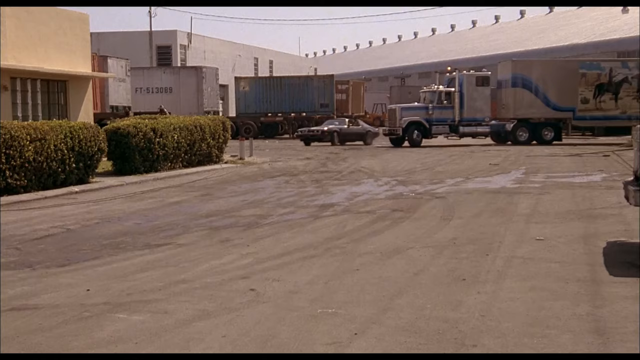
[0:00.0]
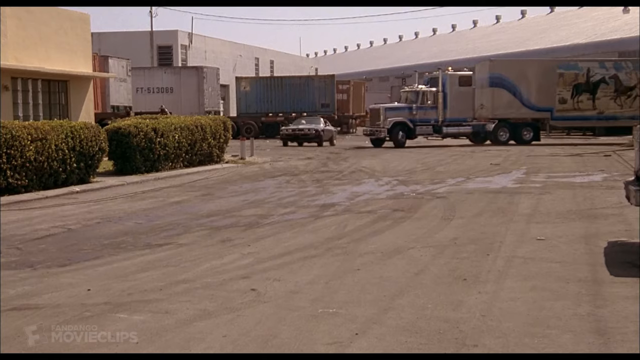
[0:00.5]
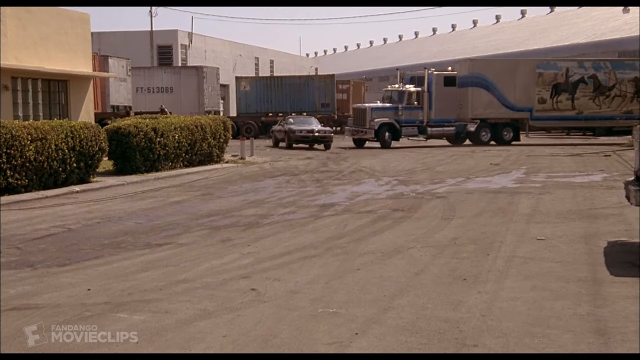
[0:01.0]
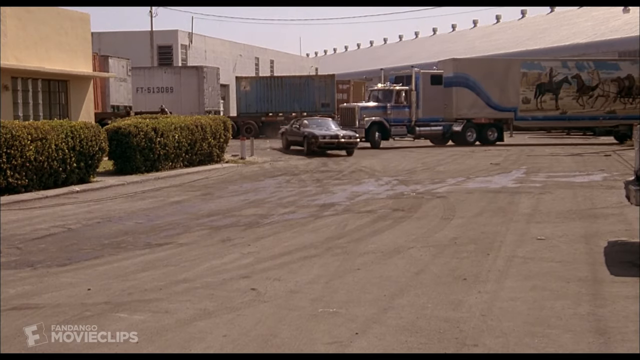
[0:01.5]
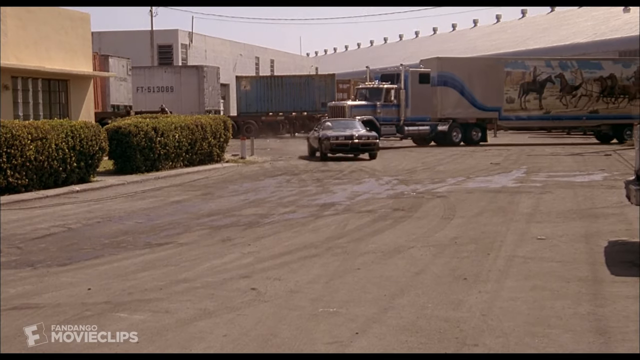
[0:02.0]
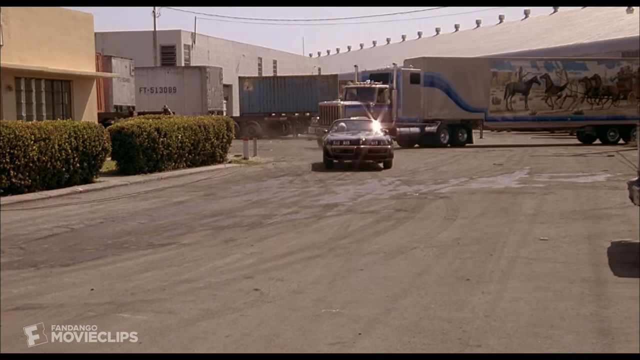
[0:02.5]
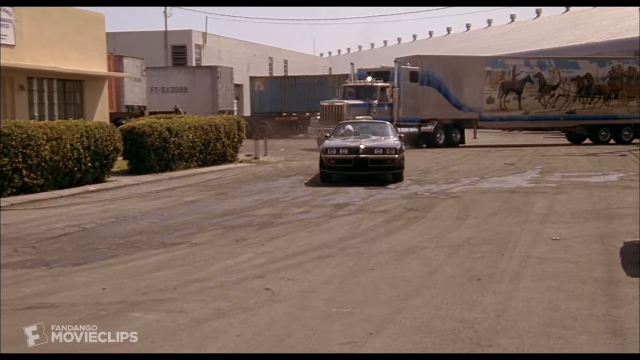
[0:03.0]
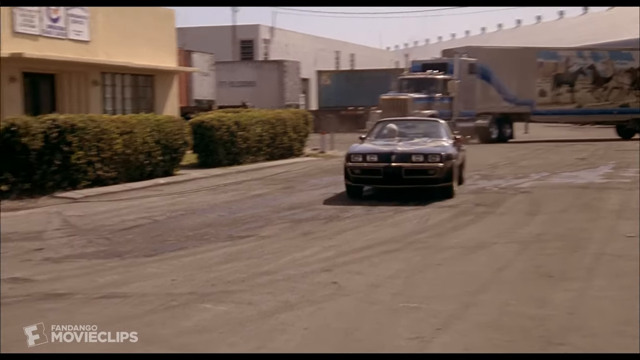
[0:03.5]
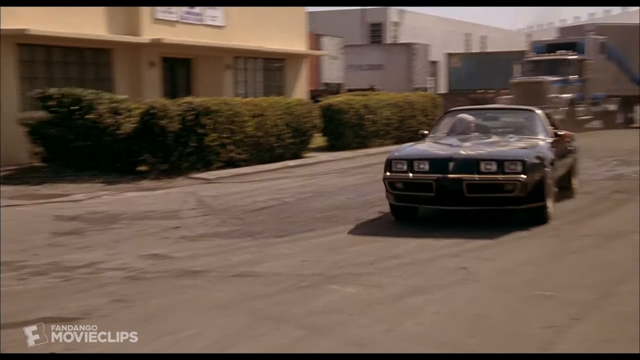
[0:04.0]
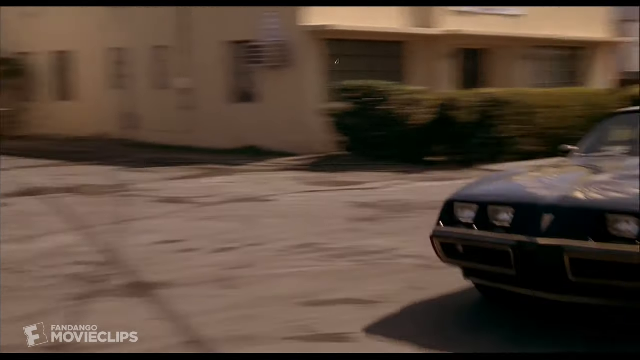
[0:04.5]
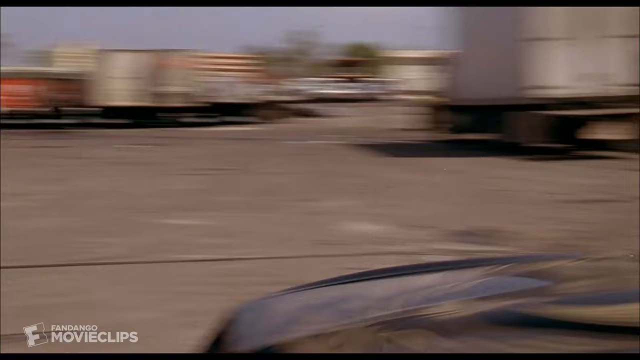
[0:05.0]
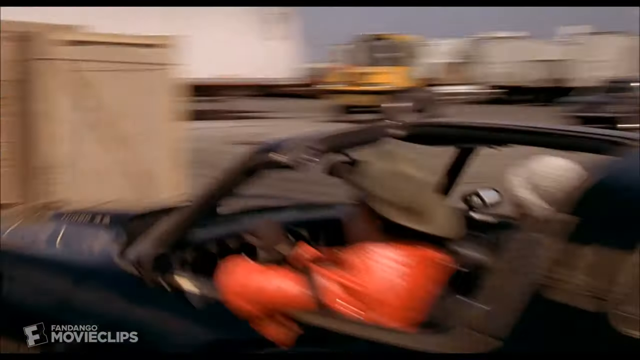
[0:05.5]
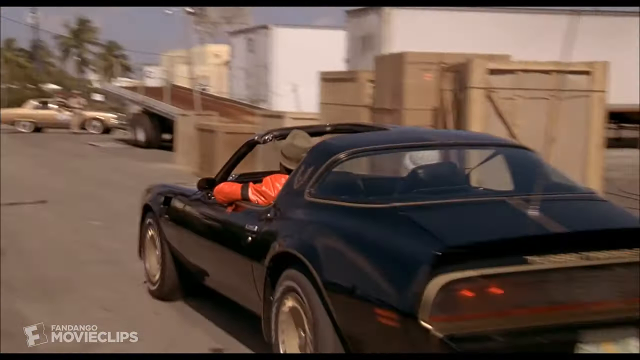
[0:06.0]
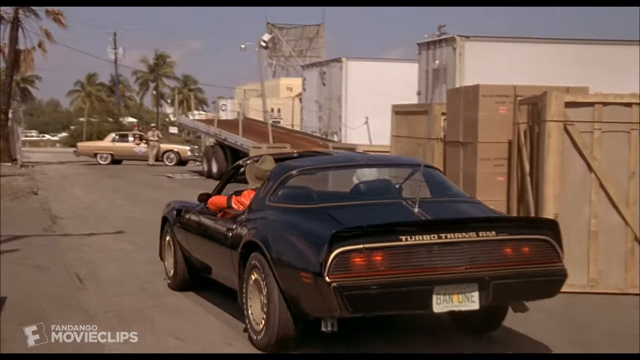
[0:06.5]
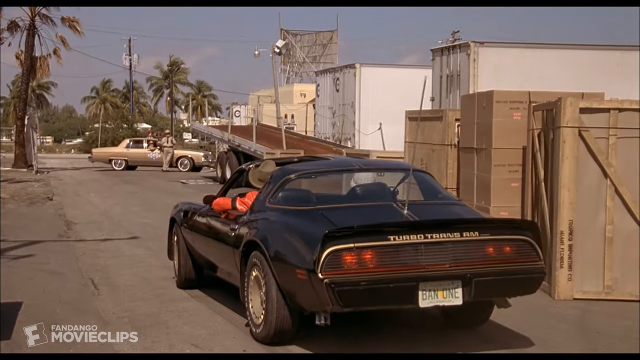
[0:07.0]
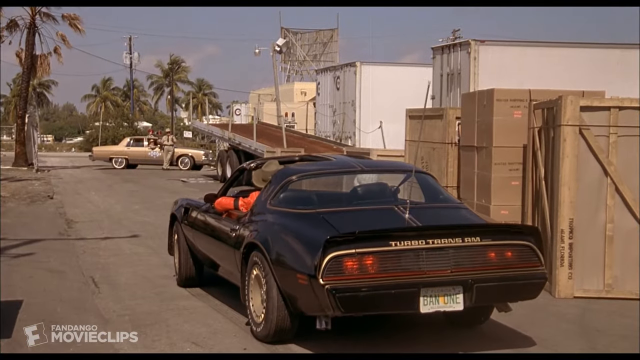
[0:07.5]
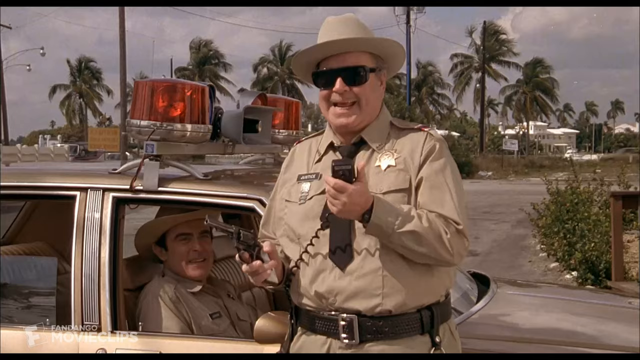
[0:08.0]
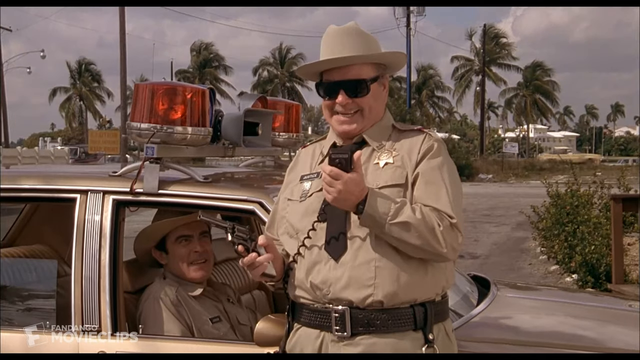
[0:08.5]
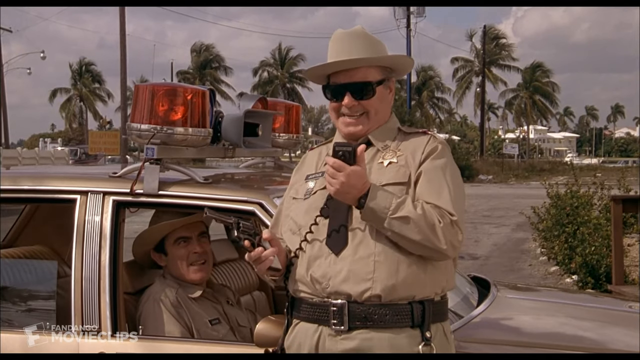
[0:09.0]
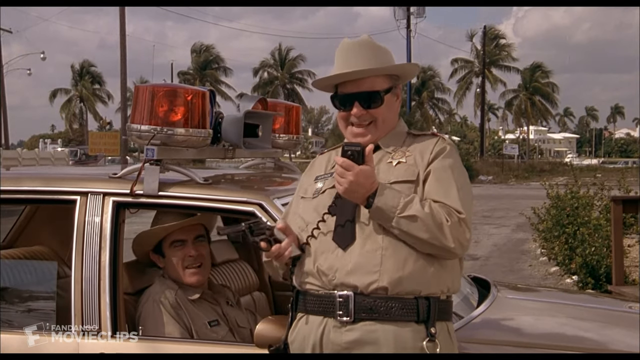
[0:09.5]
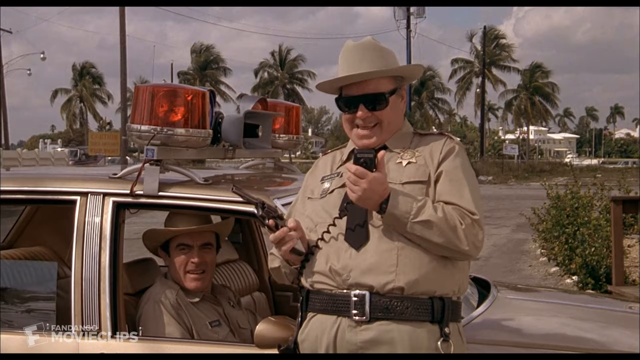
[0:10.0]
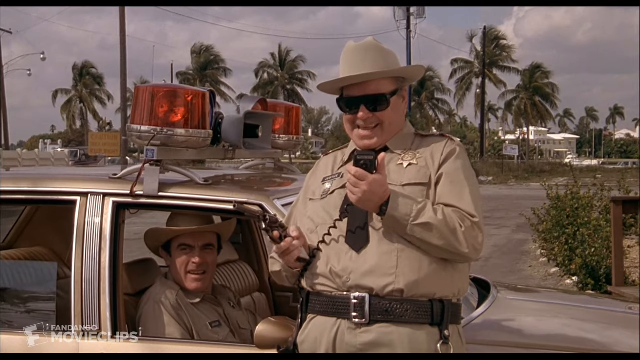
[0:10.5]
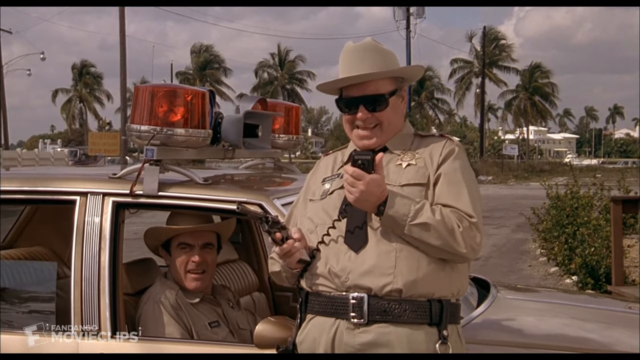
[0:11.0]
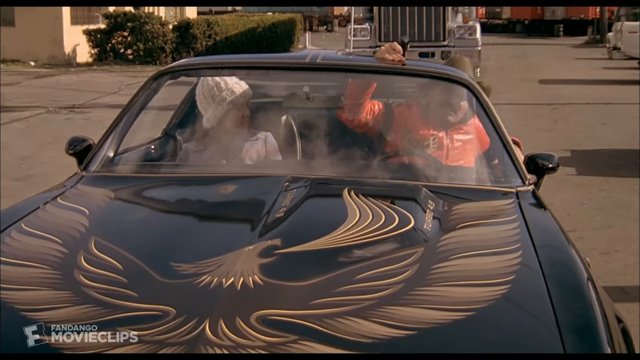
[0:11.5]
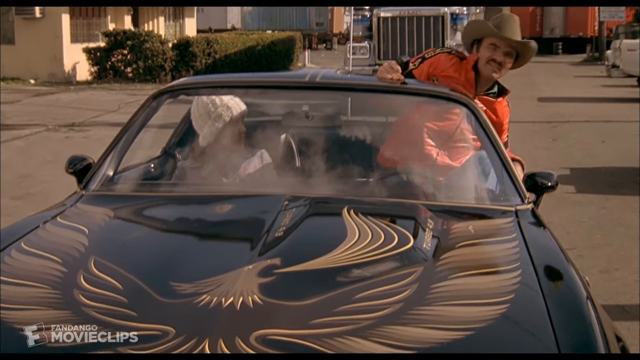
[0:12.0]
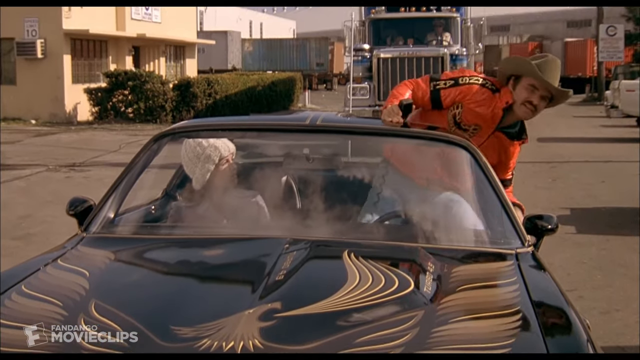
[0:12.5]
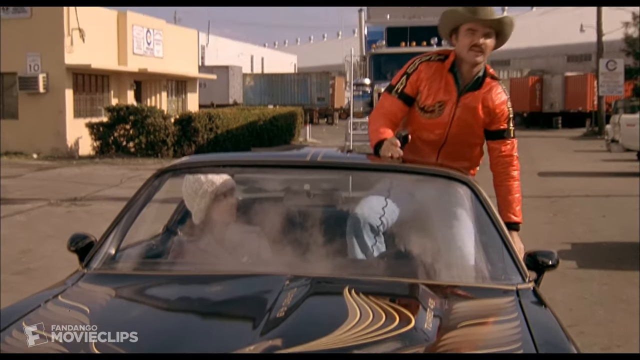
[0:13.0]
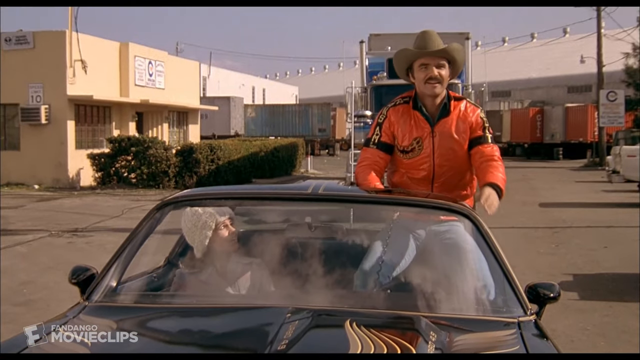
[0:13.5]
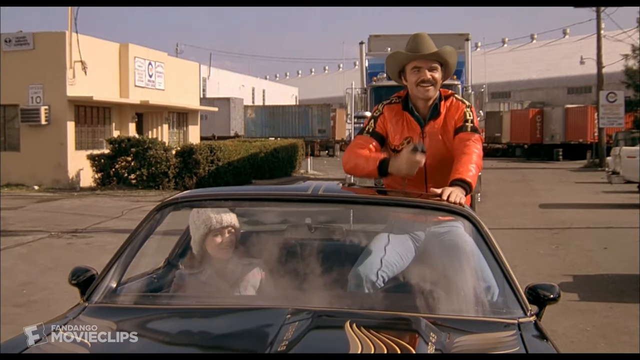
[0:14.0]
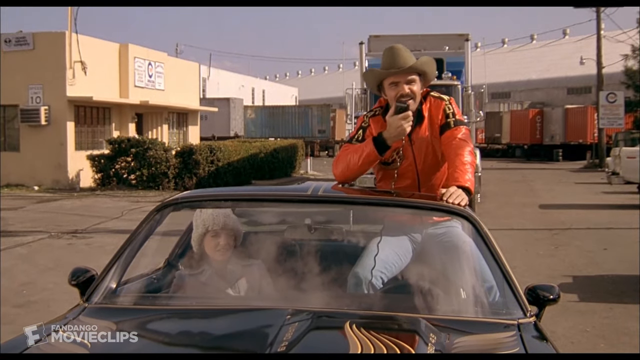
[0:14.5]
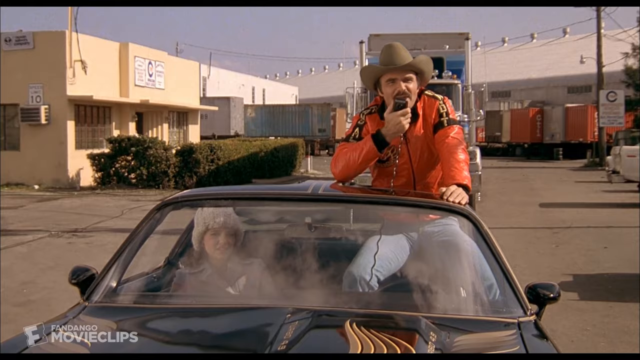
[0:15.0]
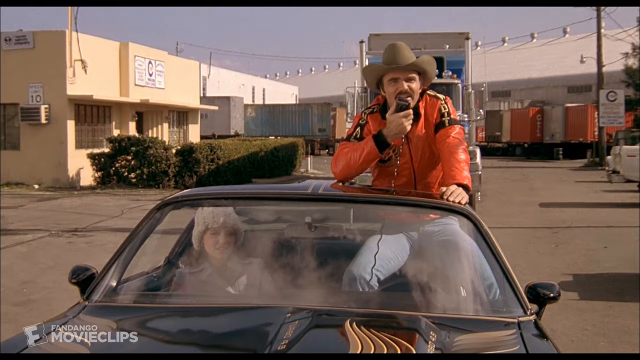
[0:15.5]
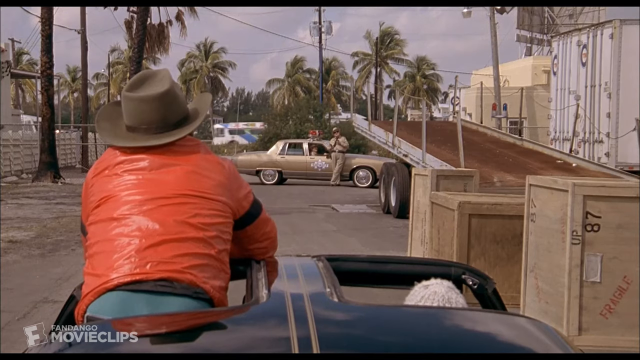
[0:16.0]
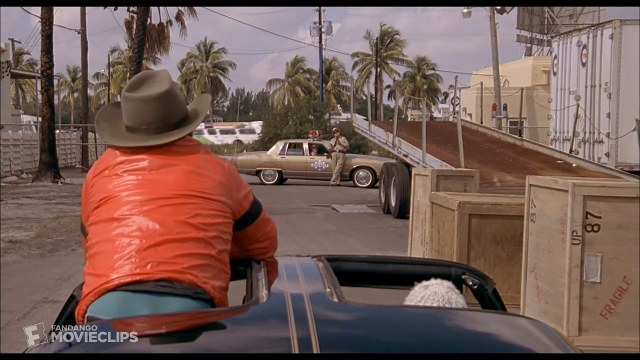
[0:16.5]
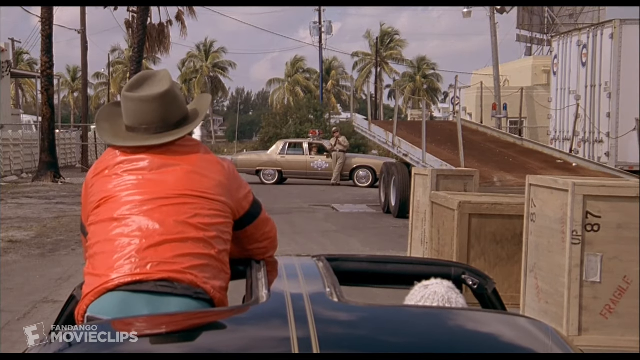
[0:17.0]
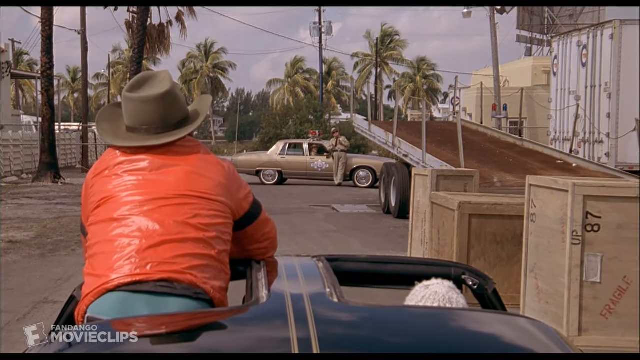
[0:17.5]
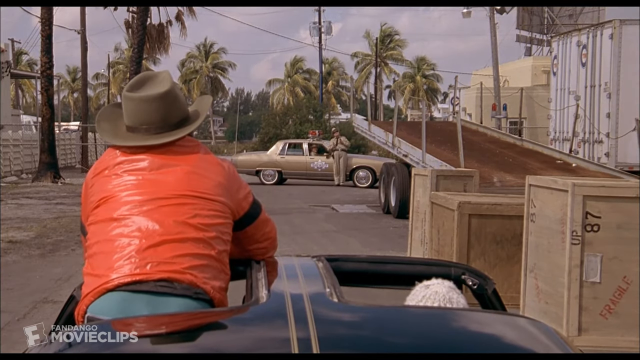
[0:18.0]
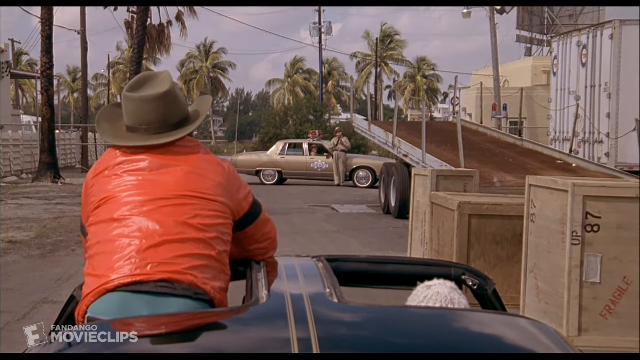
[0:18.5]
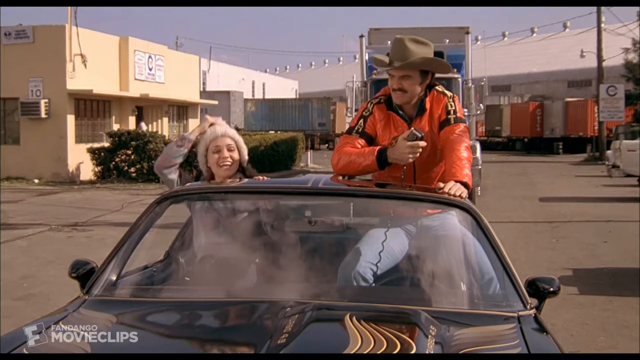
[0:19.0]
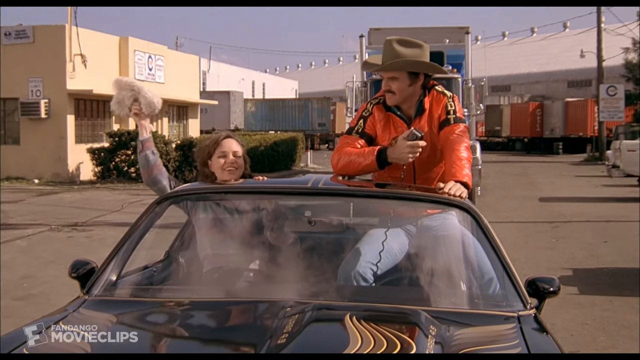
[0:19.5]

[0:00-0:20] In a chase, a car that seems to be very old crosses right in front of a giant truck carrying a huge box with a drawing of several horses on it. The car speeds along, driven by someone in orange clothes, and the word "turbo" can be read on the car. The scene cuts to two policemen. The policeman outside the police car holds a police radio in his hand, wears a hat and dark glasses, gives a sarcastic laugh, and has a gun in his right hand. He tells the person in the other car to get out, but instead that person gets up and picks up a radio inside the car, then starts talking to the police on the other side. A woman sits beside the driver and signs to the policeman.